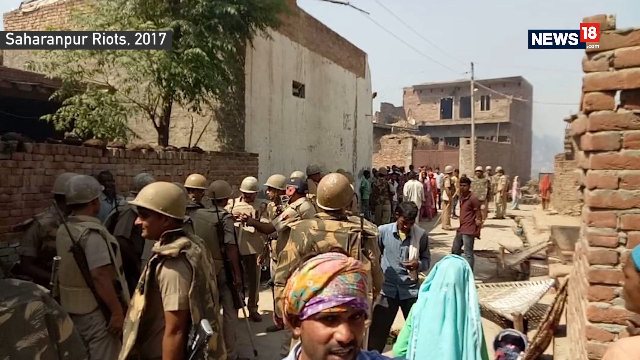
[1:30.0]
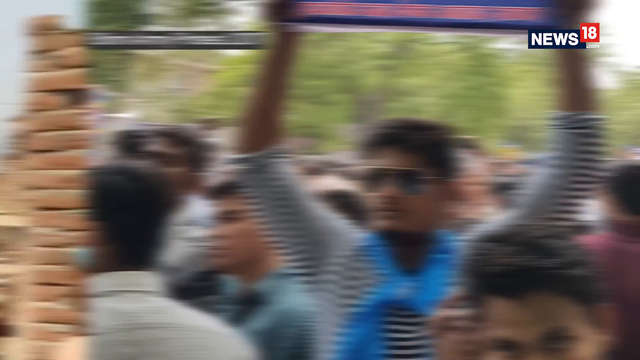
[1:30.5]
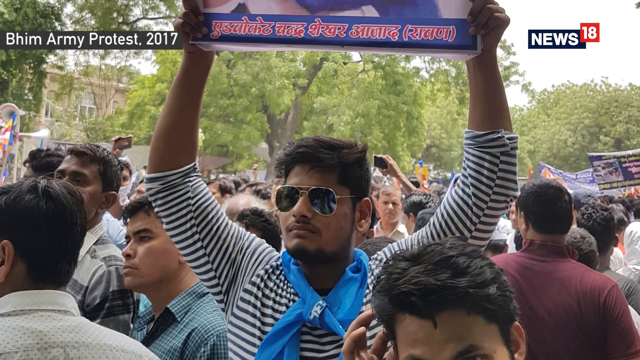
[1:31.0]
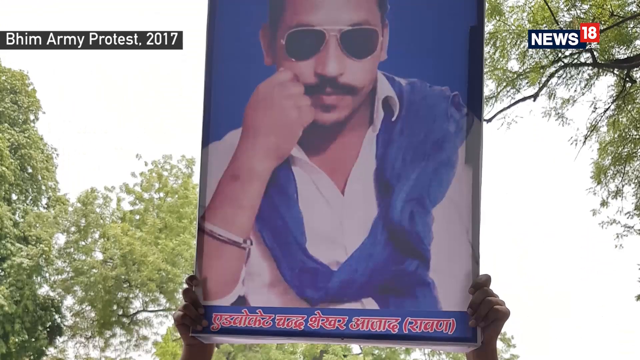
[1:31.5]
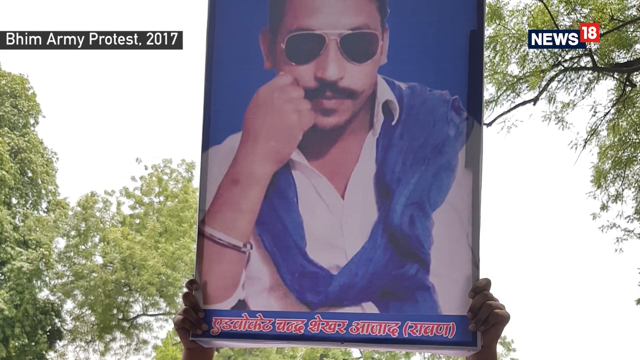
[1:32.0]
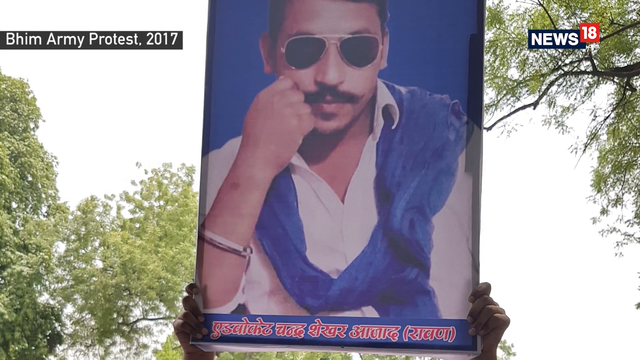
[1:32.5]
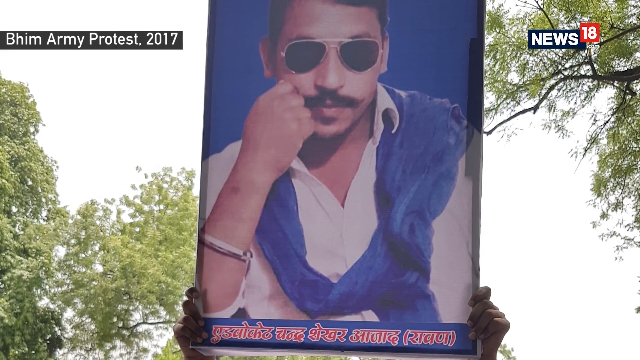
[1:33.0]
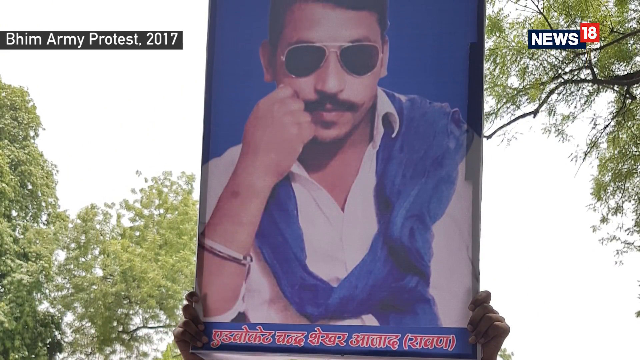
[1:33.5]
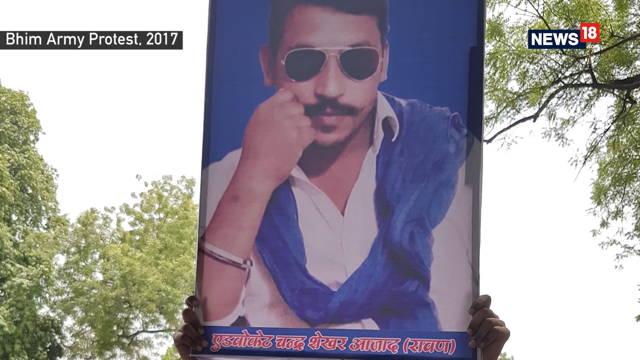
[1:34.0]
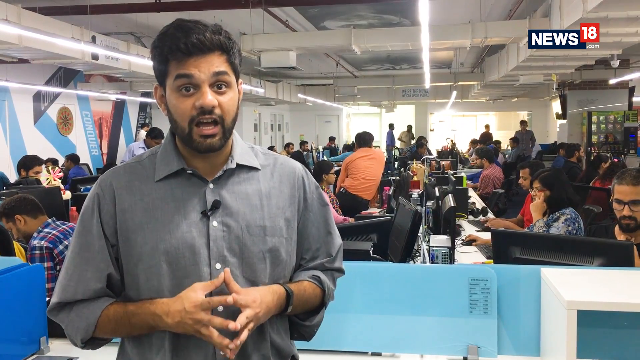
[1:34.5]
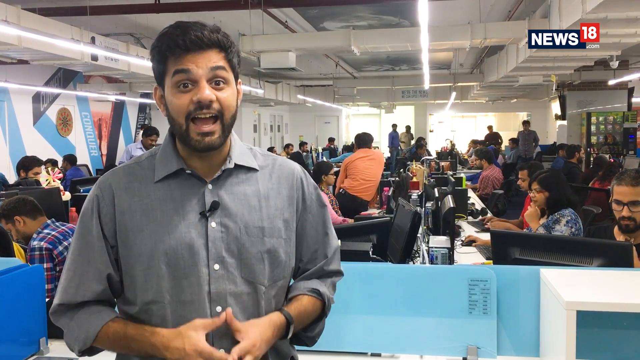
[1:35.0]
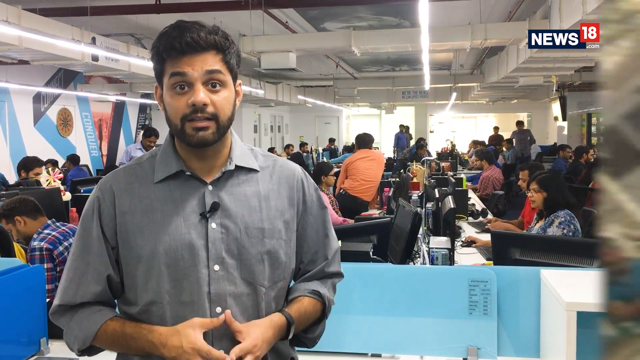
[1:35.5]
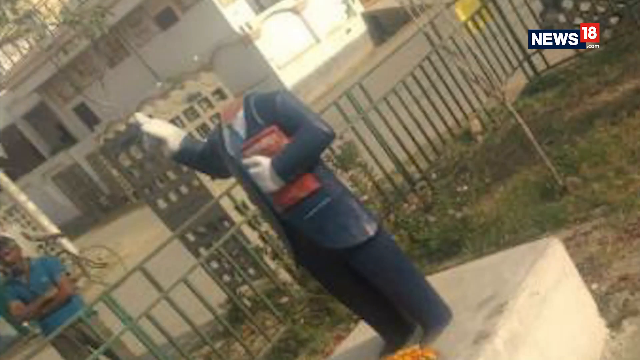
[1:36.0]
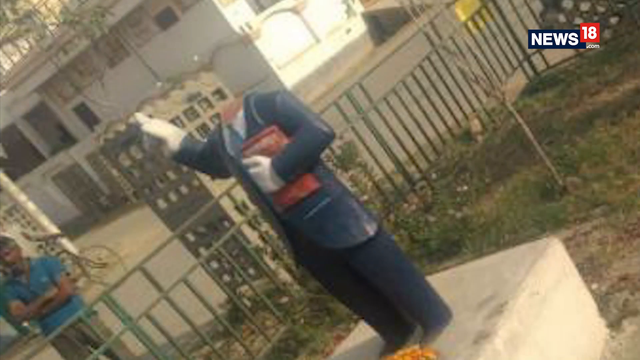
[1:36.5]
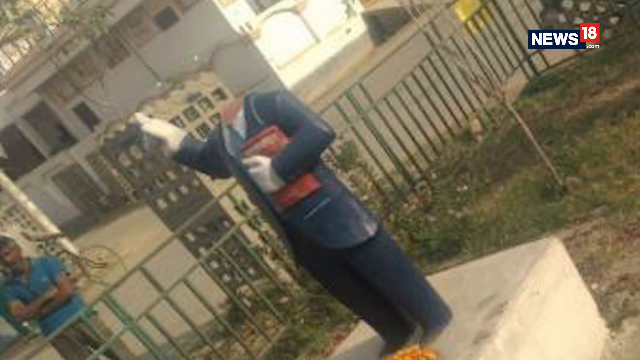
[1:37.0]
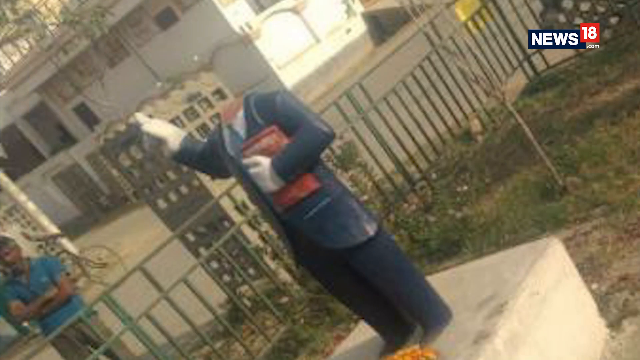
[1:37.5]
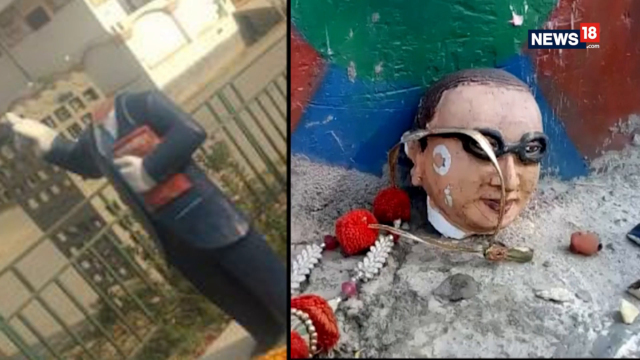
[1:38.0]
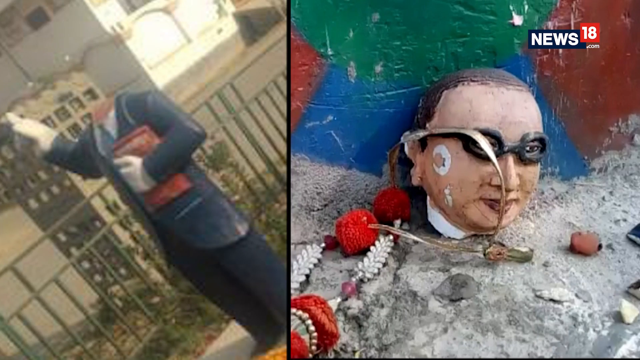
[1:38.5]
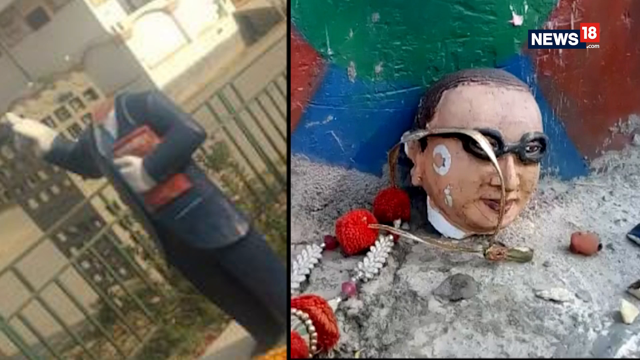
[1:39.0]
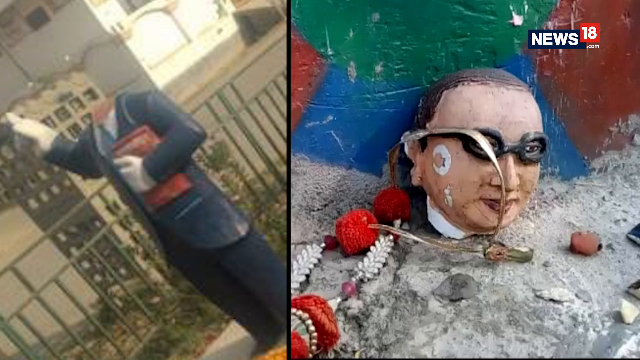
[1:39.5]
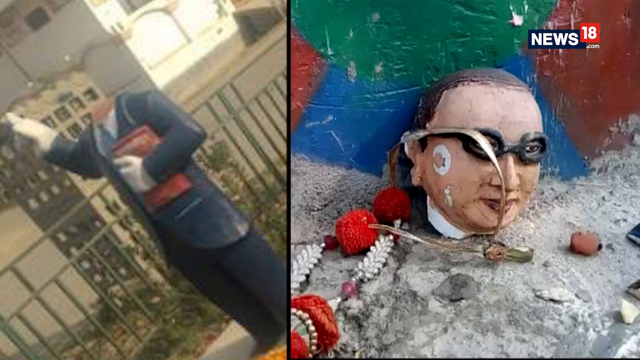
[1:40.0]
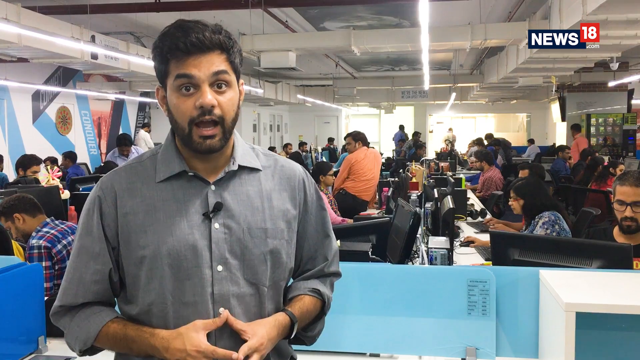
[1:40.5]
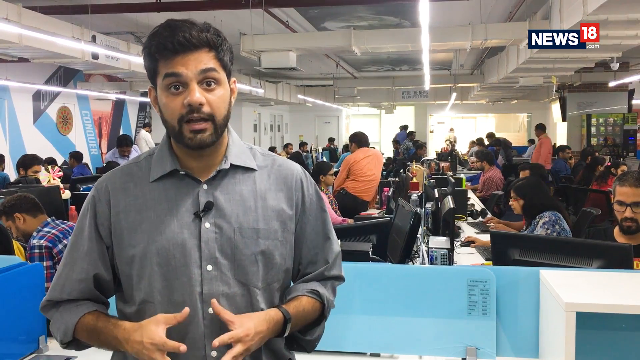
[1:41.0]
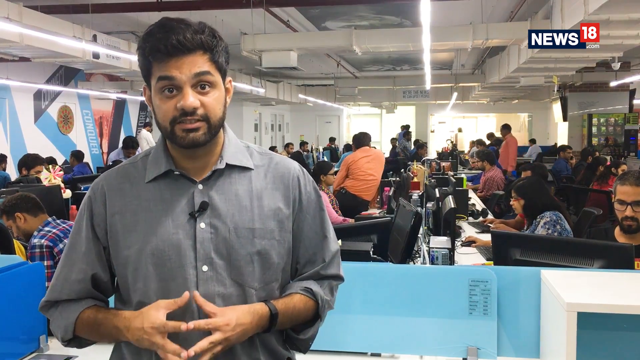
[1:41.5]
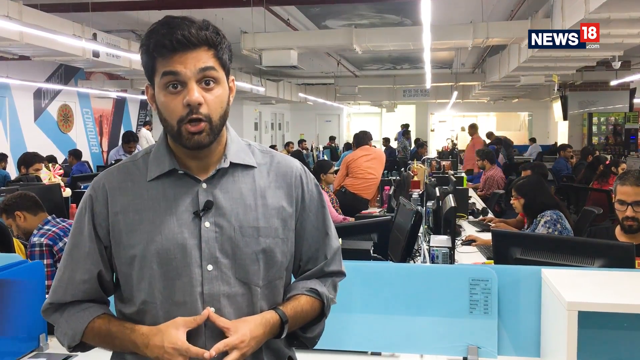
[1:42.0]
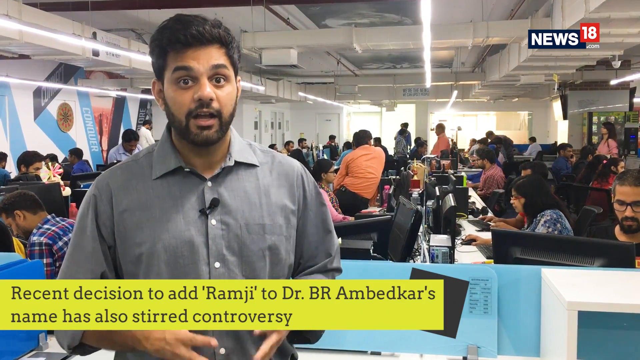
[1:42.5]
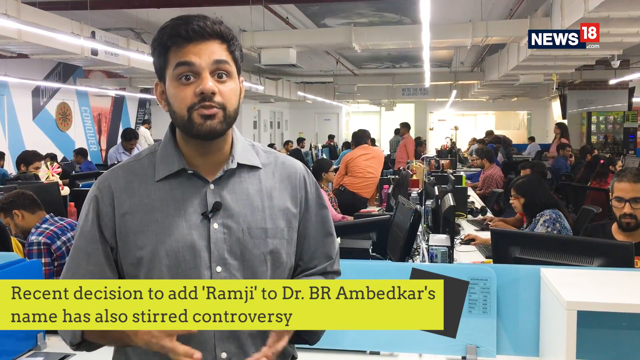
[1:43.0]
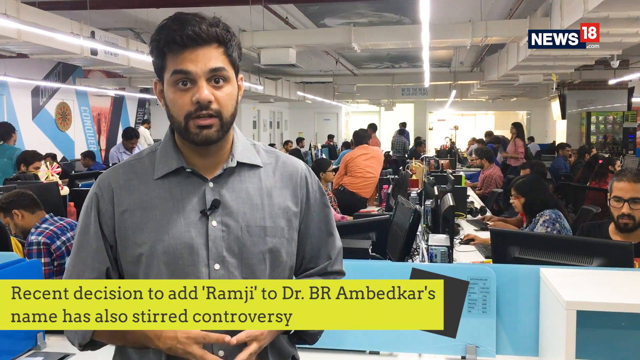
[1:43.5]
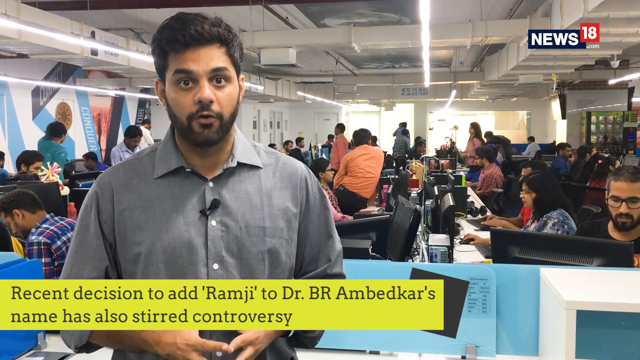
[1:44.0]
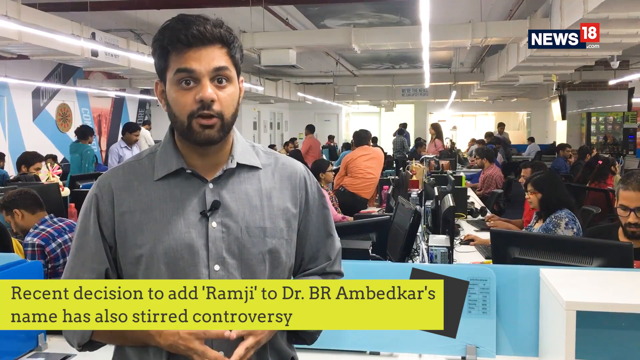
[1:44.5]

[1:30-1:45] The video, by News18, covers Bharat Bandh, Why Dalits Took to the Streets in Protest. There is a quick shot of the military police, then a quick shot of a crowd, then a picture of a man wearing sunglasses, almost like a large poster that somebody holds up over their head. The newscaster appears in the newsroom, followed by a shot of a statue whose head is missing and appears to be smashed next to it on the ground. Back with the newscaster, a text overlay reads "recent decision to add Ramji to Dr. B.R. Ambikar's name has also stirred controversy". The military, a group of people, the man holding the poster of another, unidentified man over his head, and the headless statue along the side are then shown, and the sequence keeps repeating.